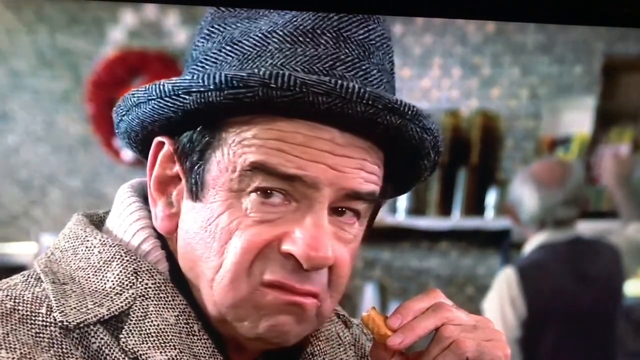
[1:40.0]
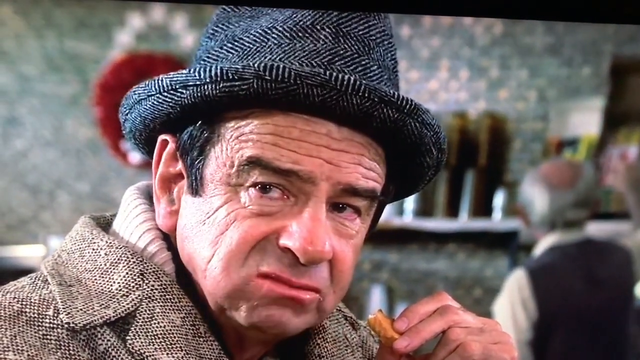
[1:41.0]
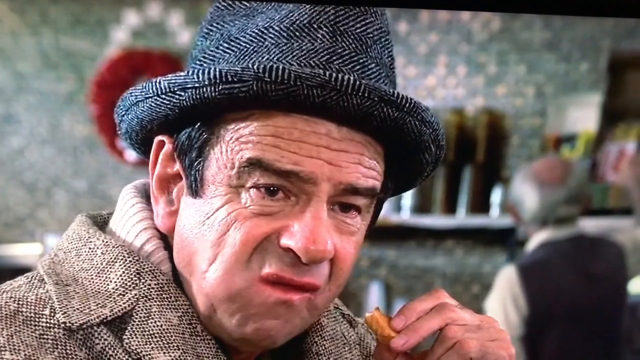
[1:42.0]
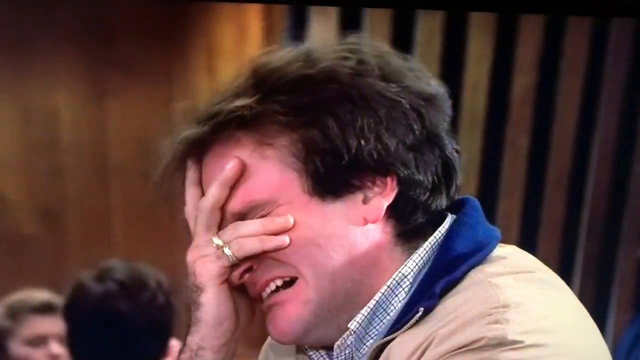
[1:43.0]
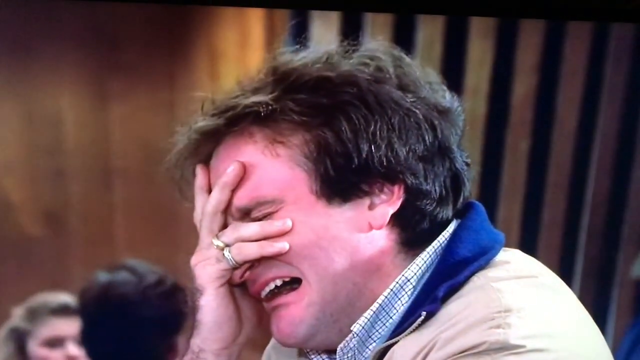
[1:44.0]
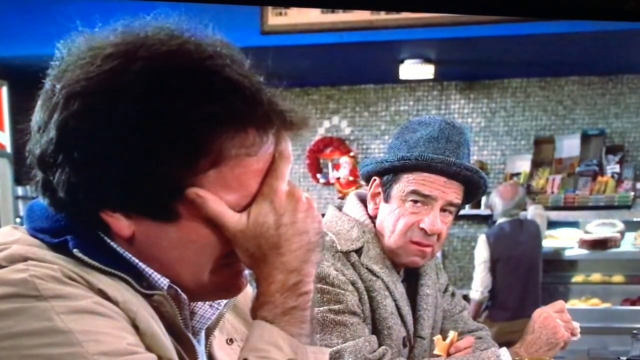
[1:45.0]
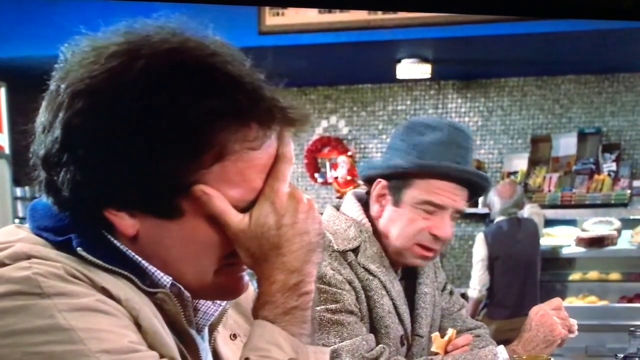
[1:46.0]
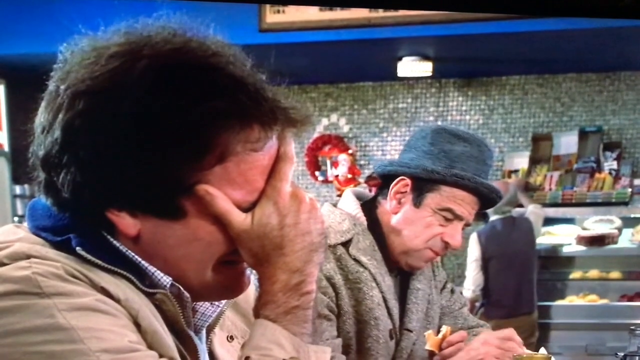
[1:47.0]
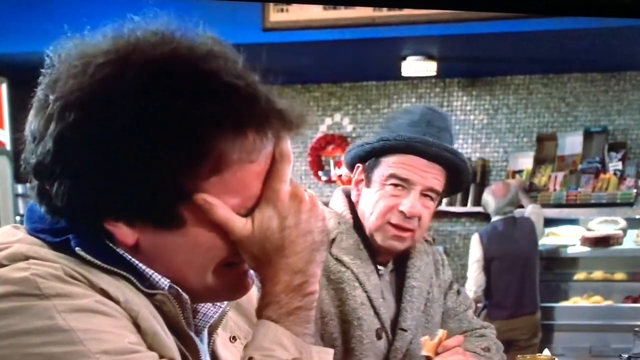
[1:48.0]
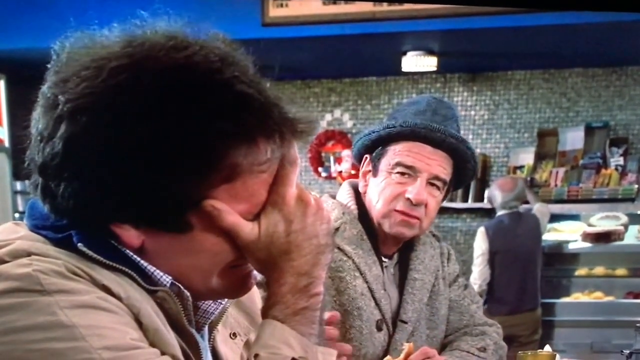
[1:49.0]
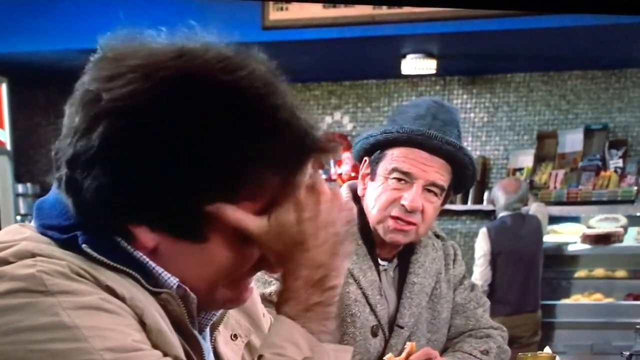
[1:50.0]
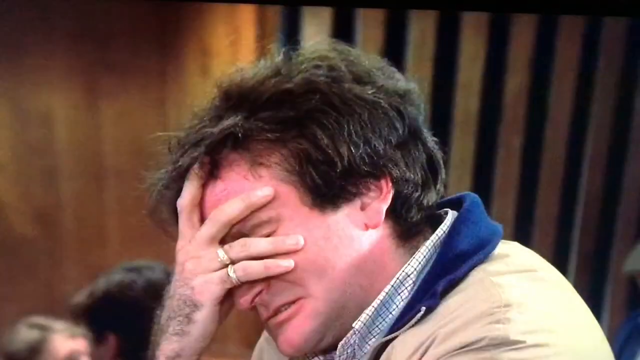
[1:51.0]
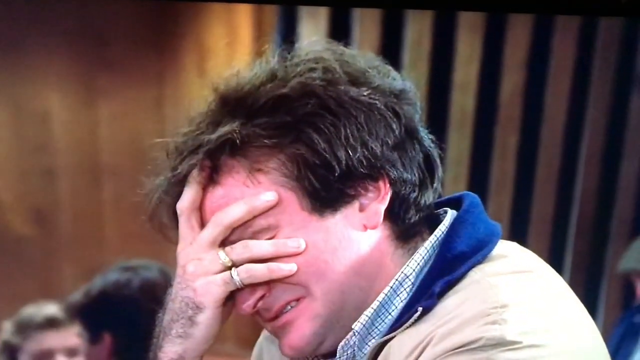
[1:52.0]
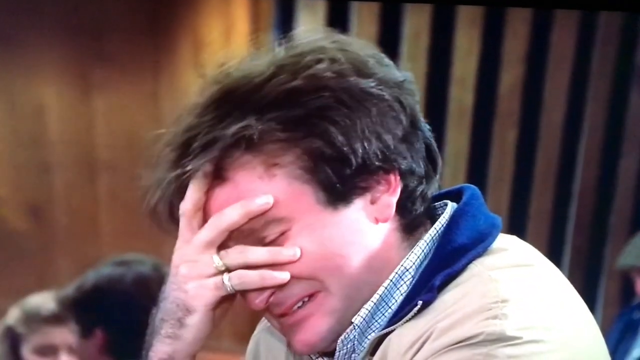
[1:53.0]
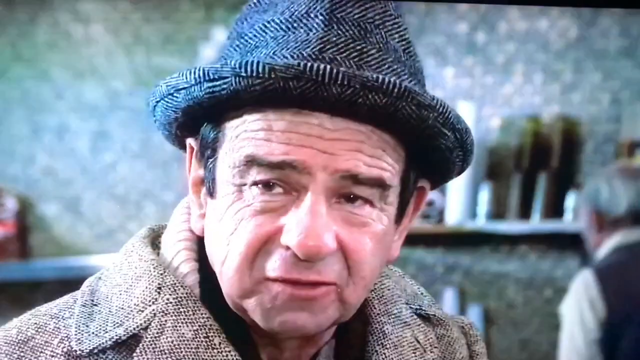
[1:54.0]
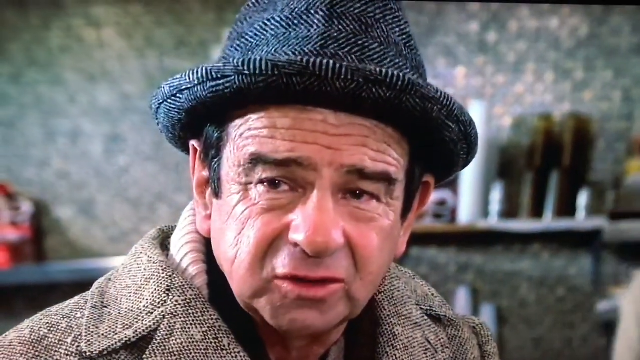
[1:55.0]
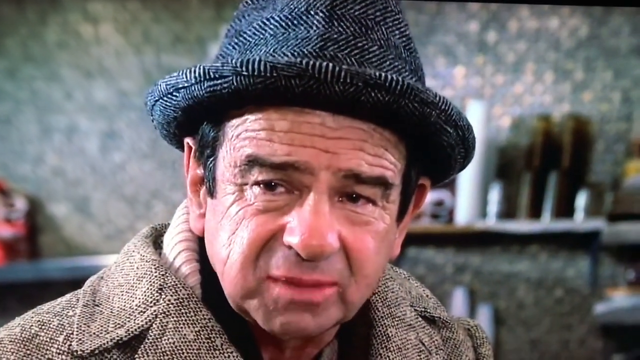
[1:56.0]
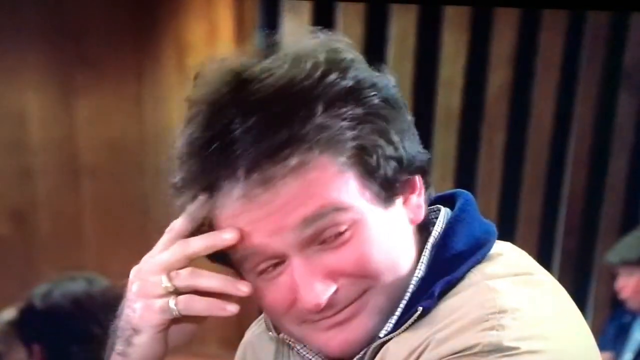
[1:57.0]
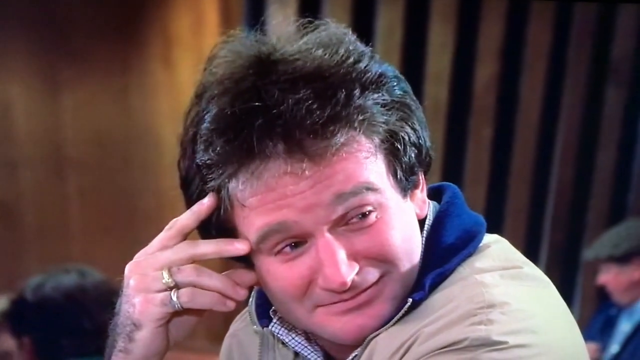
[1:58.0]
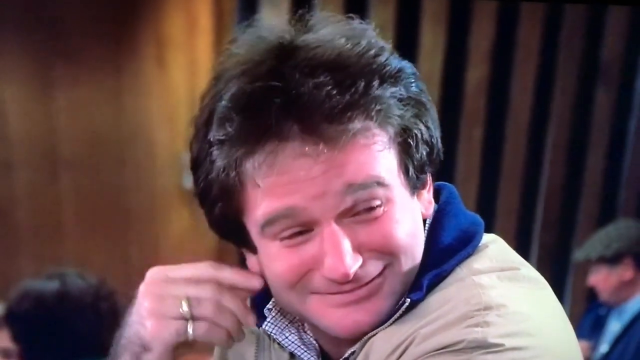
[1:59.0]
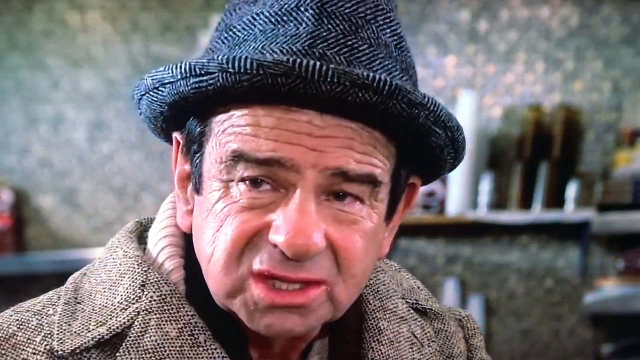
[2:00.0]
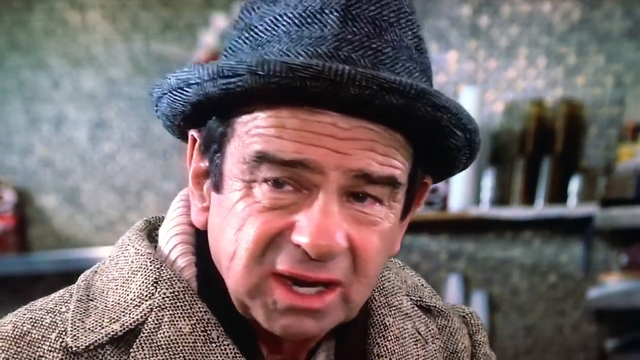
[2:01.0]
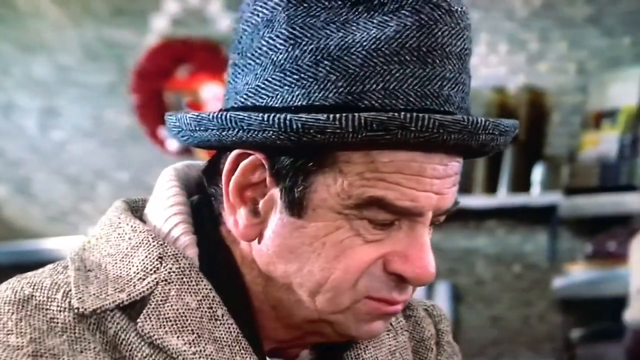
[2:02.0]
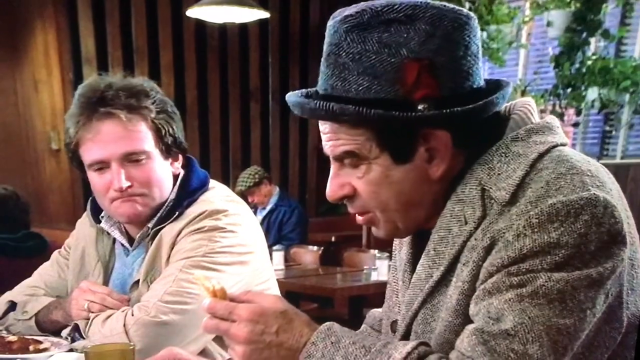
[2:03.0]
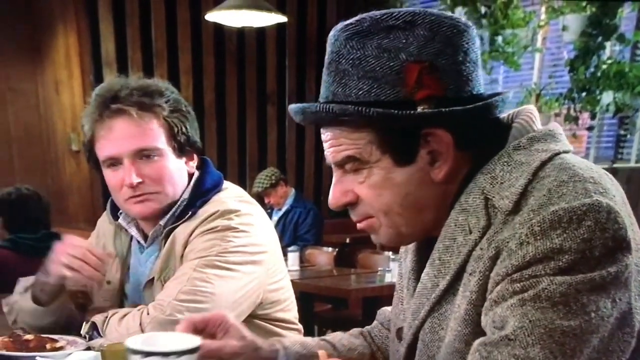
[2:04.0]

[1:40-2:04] The man with the hat grimaces, looking a bit disgusted at what he sees, possibly embarrassed or cringing. The shot then shows the sulking man, who is not laughing but crying, basically wailing: his mouth is open, his face is quite red, and his hand covers his face. The man with the hat looks at him, puts his food back down, turns his body toward him, and keeps saying some words. The crying man slowly lets go of his face and looks at him again, and he seems to be crying less. The man with the hat is still saying some words, possibly words of encouragement or wisdom. The two seem to be strangers in a diner.